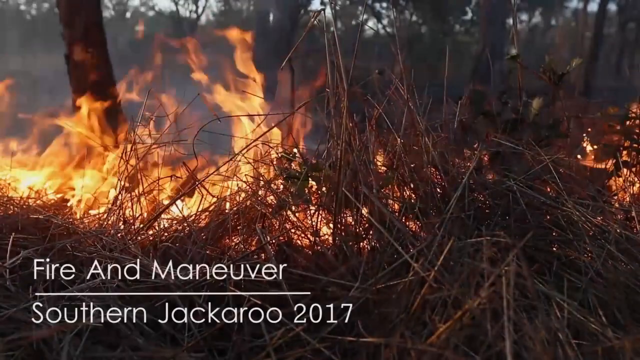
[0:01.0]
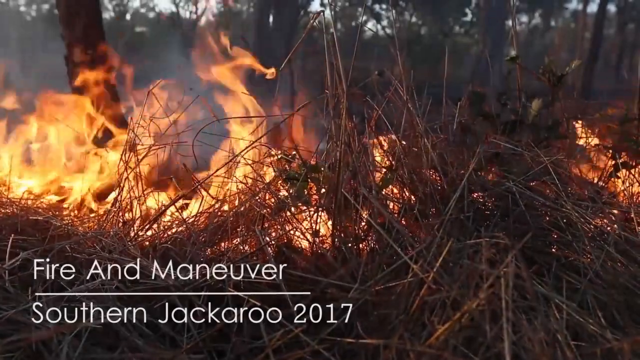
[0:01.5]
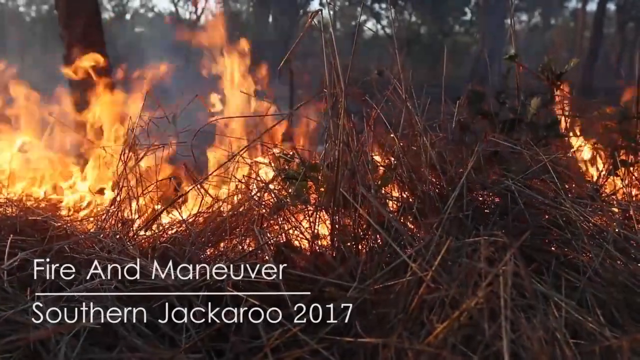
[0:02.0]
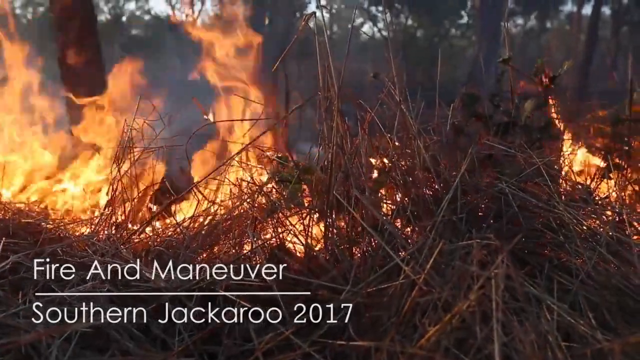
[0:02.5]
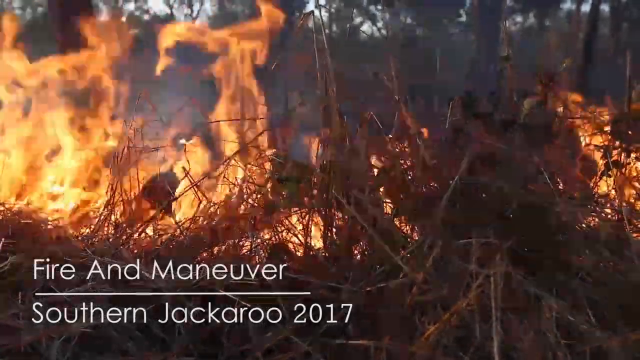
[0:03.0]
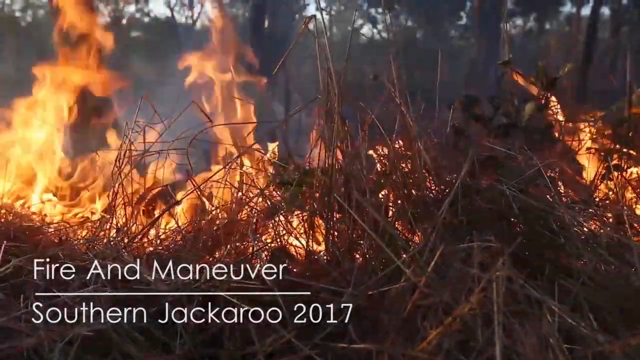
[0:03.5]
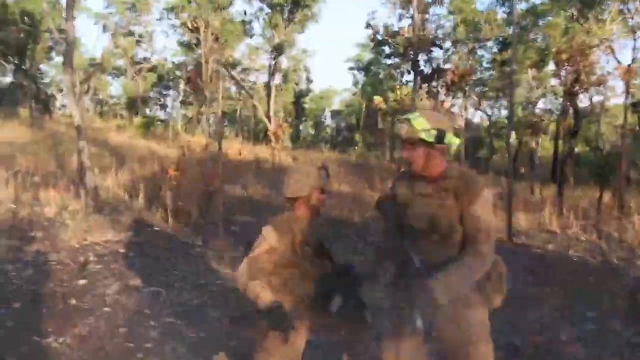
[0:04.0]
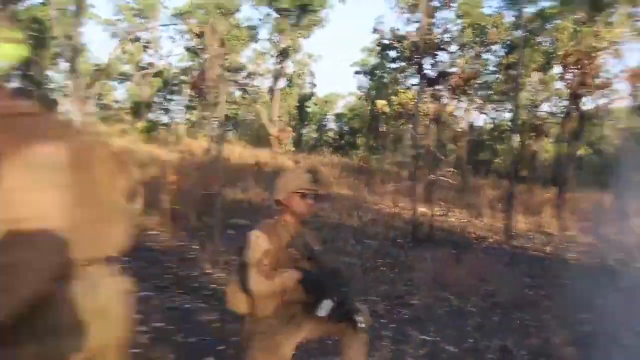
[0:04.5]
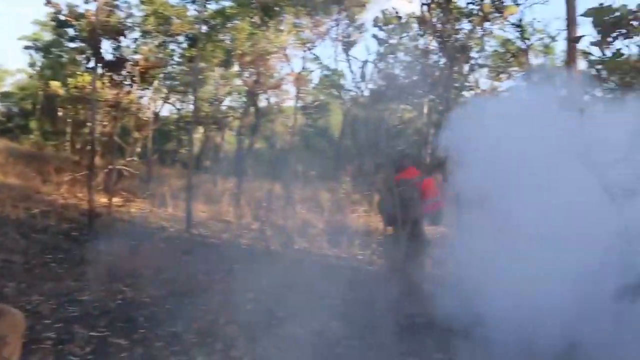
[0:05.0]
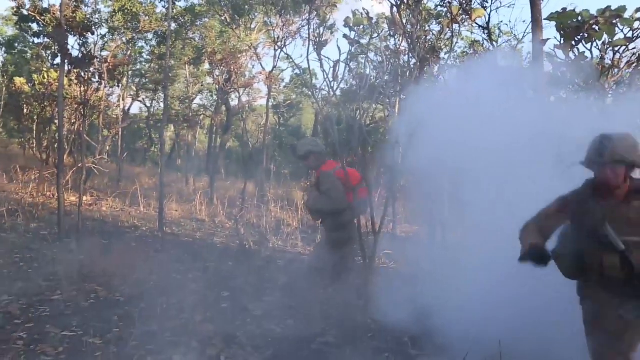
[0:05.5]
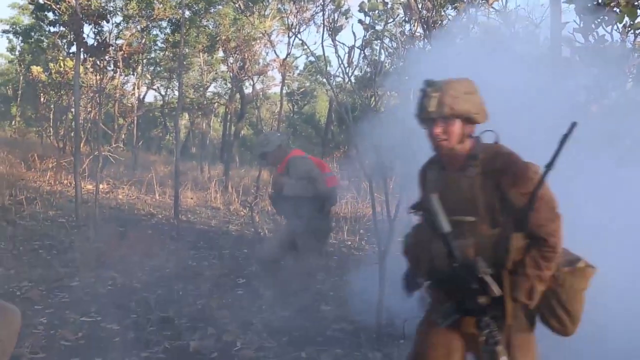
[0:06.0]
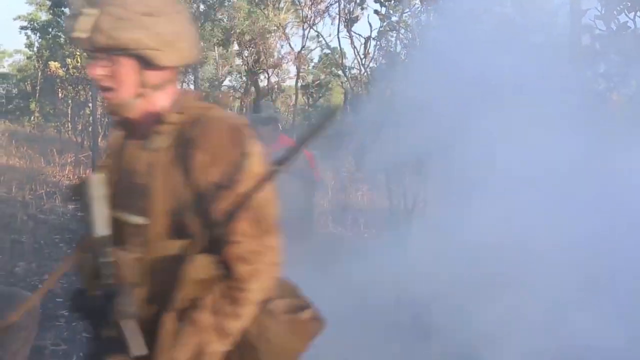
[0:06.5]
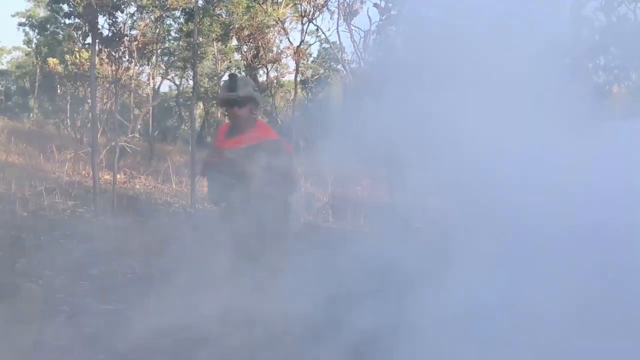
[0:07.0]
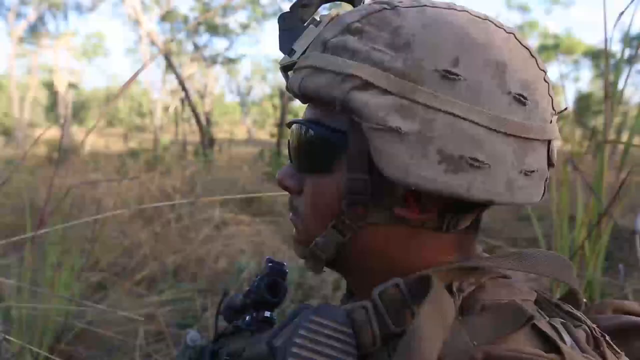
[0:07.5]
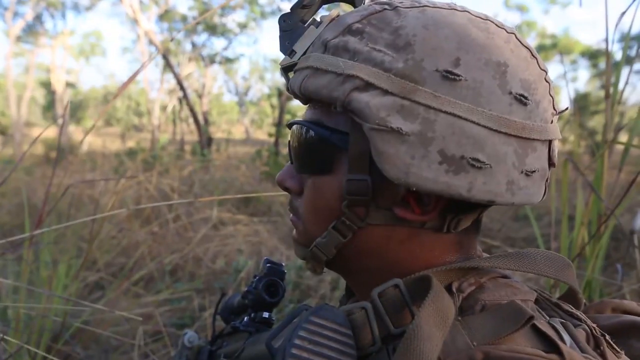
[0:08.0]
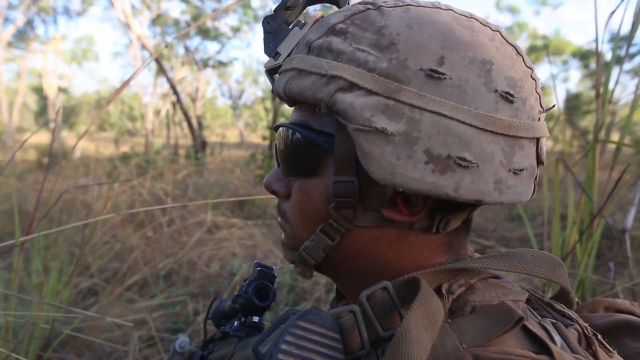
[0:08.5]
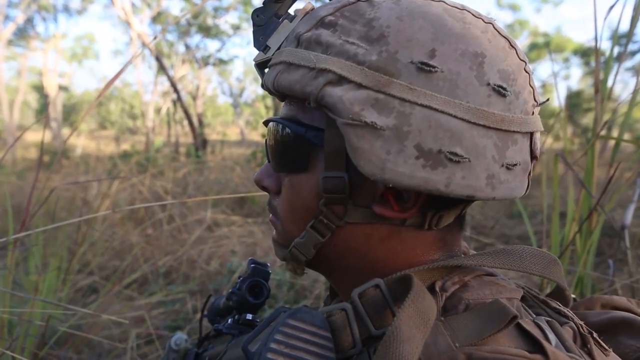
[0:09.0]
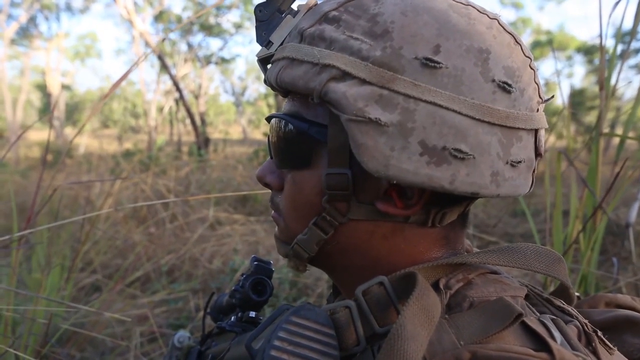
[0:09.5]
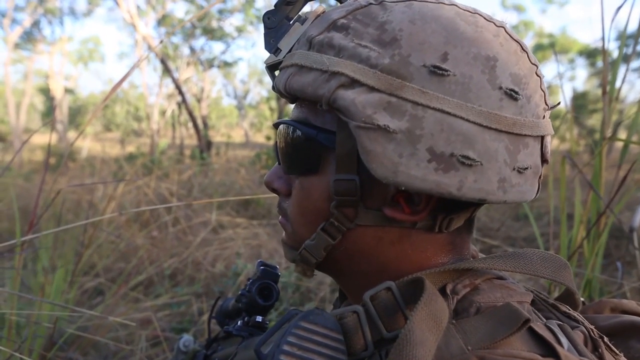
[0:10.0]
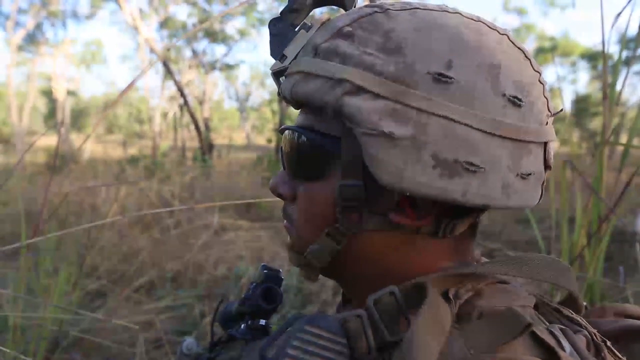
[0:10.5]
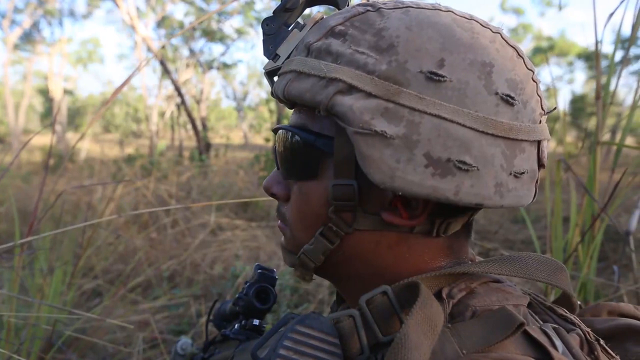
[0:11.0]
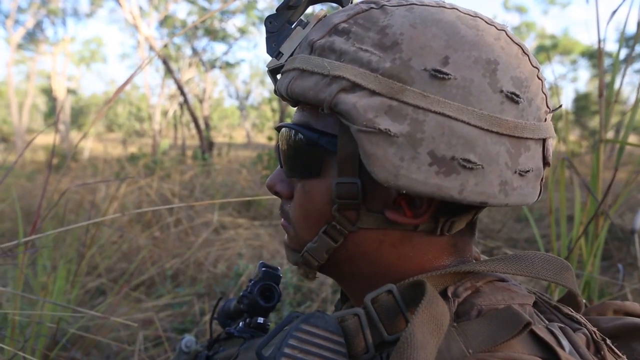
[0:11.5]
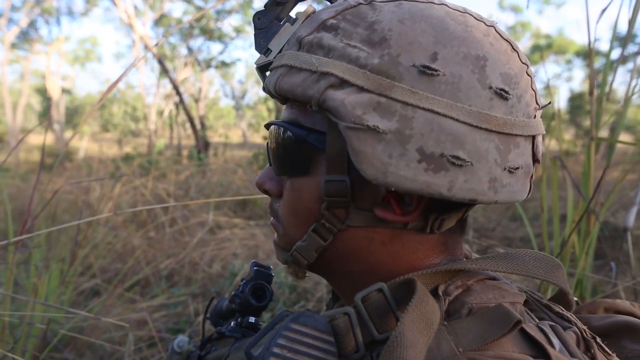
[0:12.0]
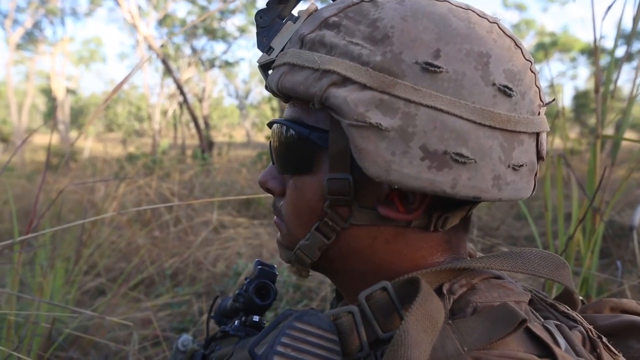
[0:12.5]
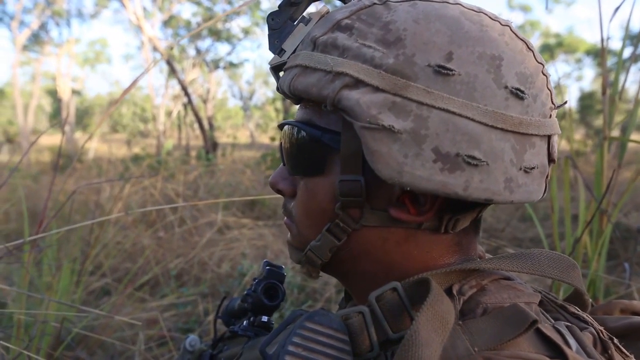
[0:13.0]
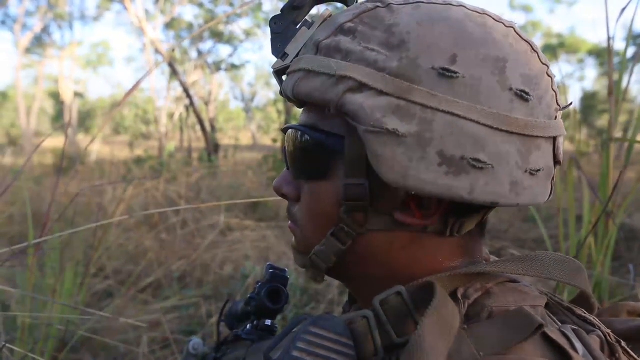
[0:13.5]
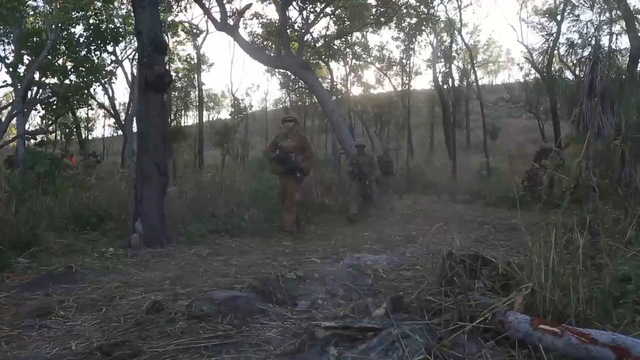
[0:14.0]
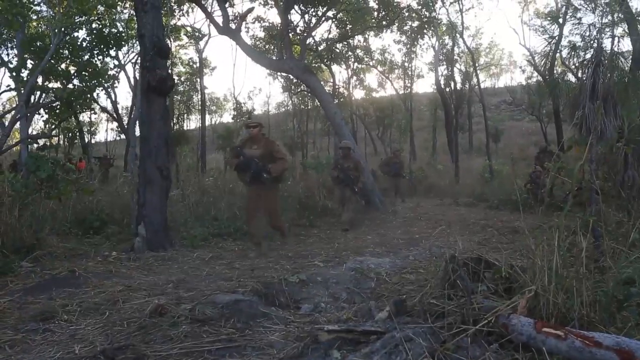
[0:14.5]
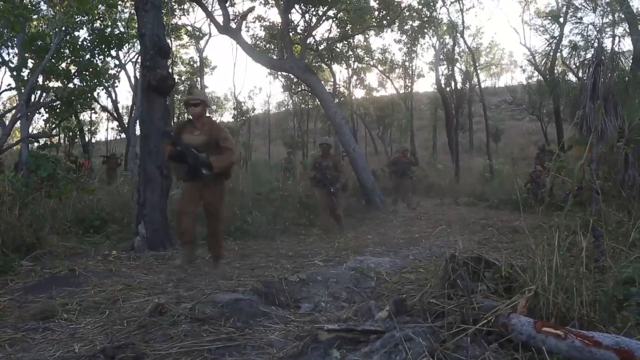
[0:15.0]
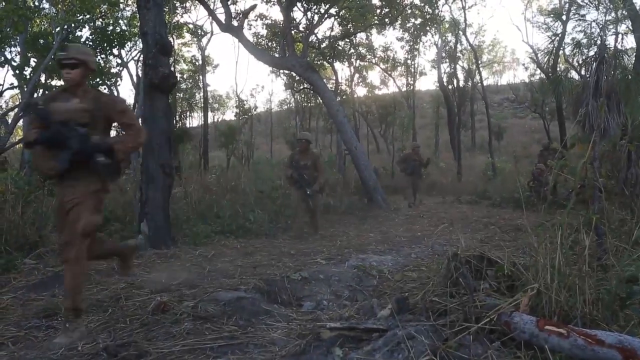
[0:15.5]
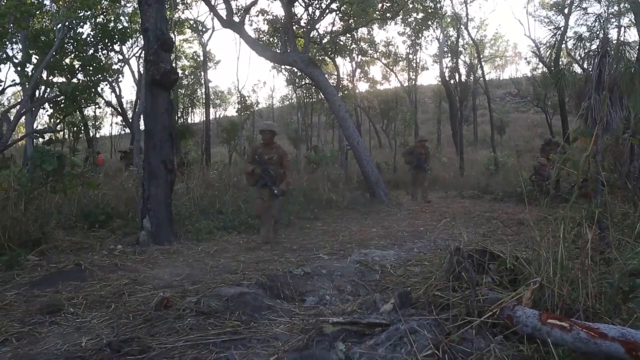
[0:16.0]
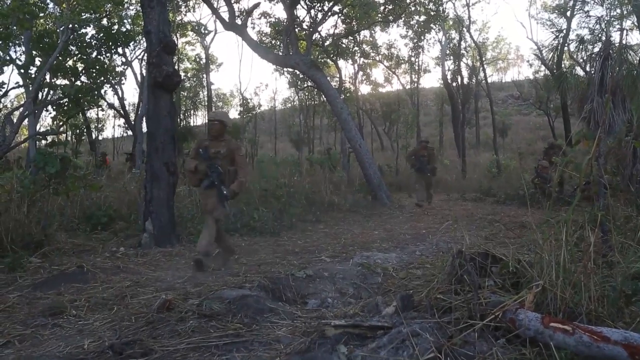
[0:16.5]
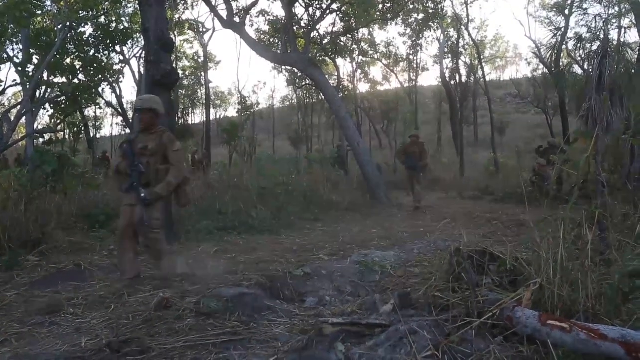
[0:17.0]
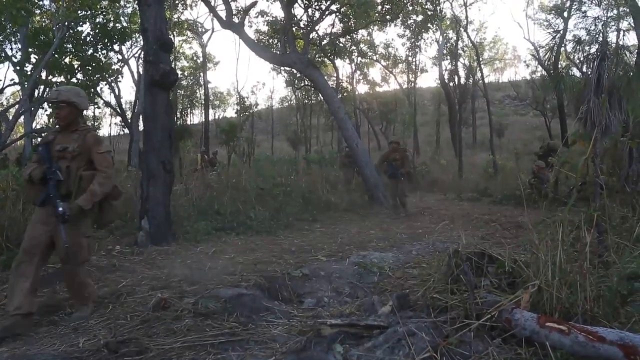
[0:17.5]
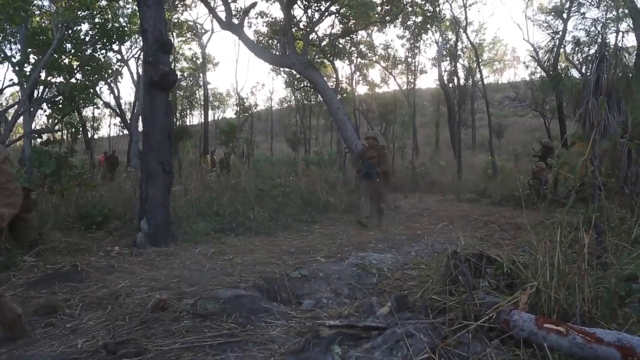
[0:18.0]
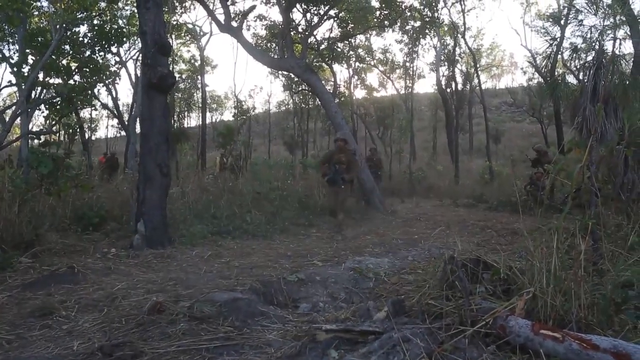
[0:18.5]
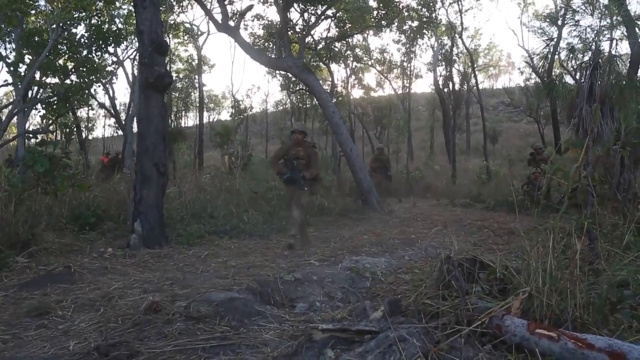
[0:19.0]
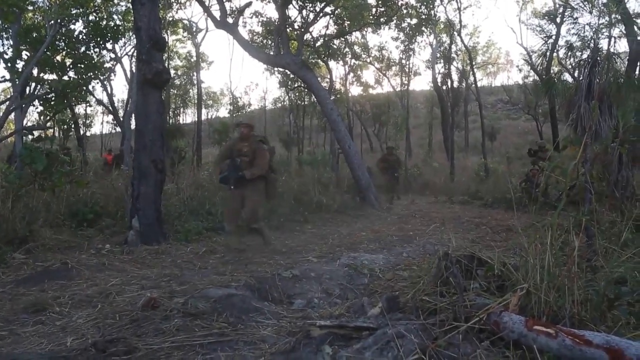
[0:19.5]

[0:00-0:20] A fire burns in a brush area as firefighters run from the right of the screen toward the left. There is a lot of smoke, and then the focus appears to be on a military person: the people who seemed to be firefighters appear to really be soldiers, running from the lower right of the screen up toward the top. The soldiers come around a corner, with burned-out brush on the right-hand side of them. It looks like Southern Jackaroo 2017, and it is a Fire and Maneuver. One of the men has an orange cape flowing around his neck. The rest hold guns or weapons at their waists, pointing them down toward the left side, toward the ground. A man standing toward the end of the pack, which is running toward him, acts as if he is encouraging them. He has a lot of sweat on him and visible stubble on his beard, and he is seen from the right side of his profile.